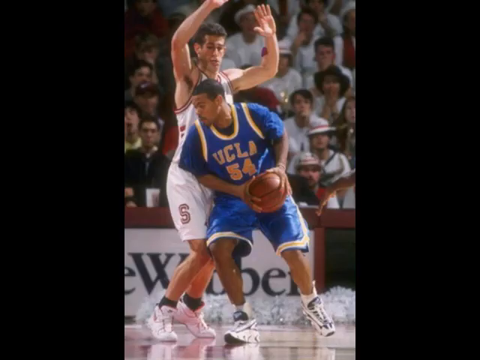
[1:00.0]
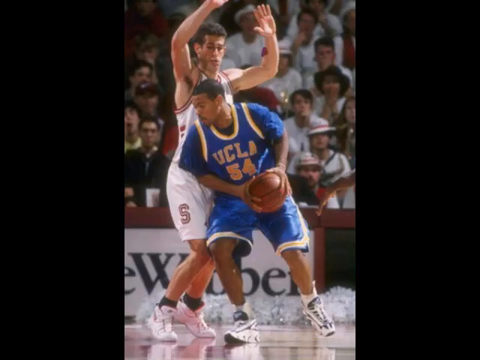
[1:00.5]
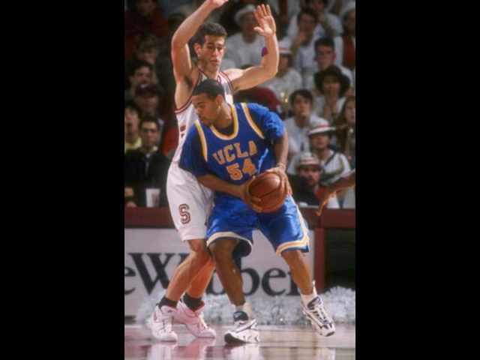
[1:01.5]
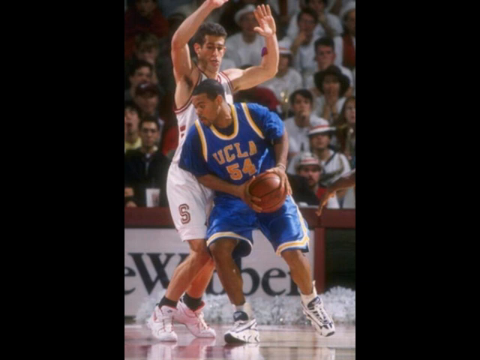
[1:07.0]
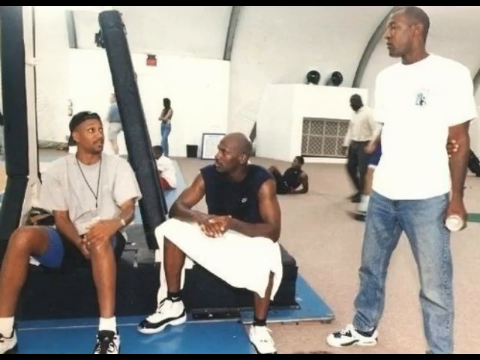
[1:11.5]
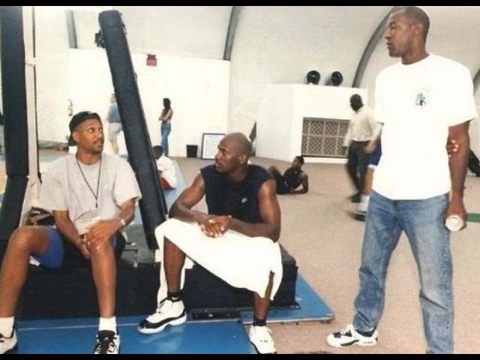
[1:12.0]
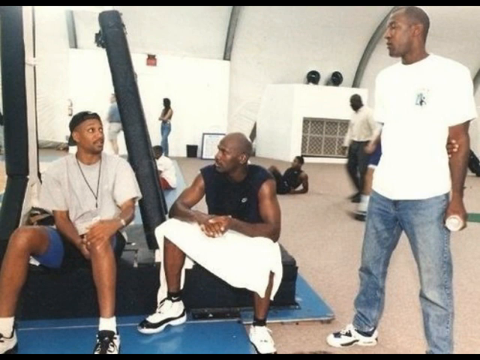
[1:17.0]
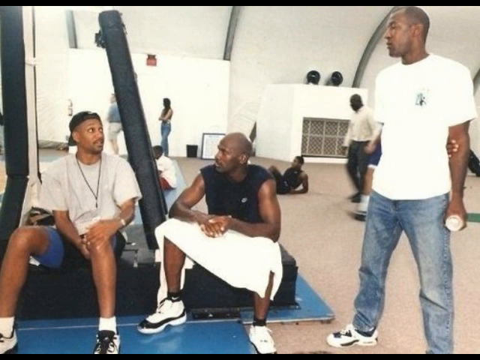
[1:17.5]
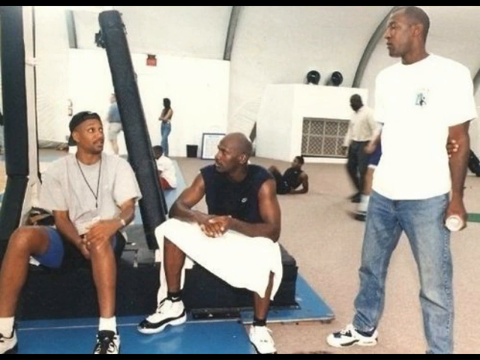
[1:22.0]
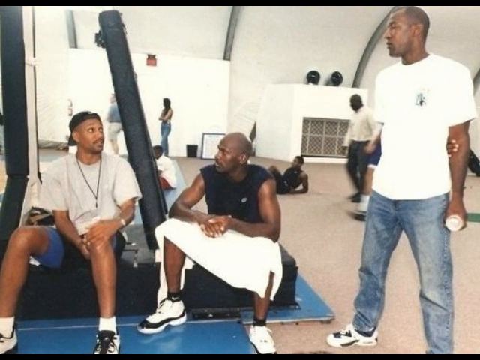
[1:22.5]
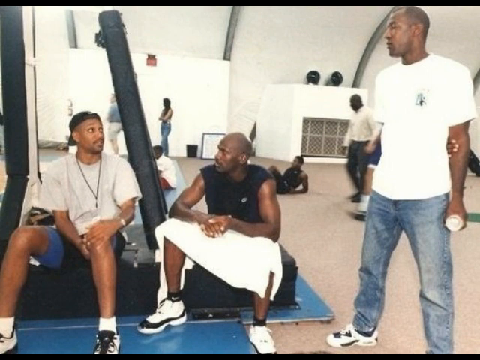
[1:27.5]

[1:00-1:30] An older-looking photo shows a UCLA player in a blue and gold uniform, number 54, with both hands on the ball. Another player guarding them looks a little taller: a white male with both hands up, wearing a white and red uniform with something like an S at the bottom right of his shorts. A crowd is in the background, though not much of it is visible because the photo is at a diagonal, looking as if it was taken with a phone. People in the background sit in the stands, mostly white men and women. Next is a photo of three individuals, with others in the background, in what seems to be a workout room or rest area, possibly for wide ranges of movement such as gymnastics. All three are African American males; two are sitting down, two wear shorts, and the one standing up wears jeans.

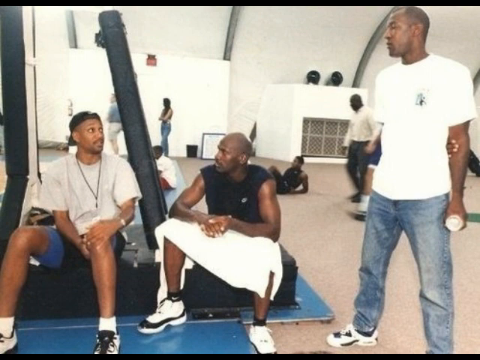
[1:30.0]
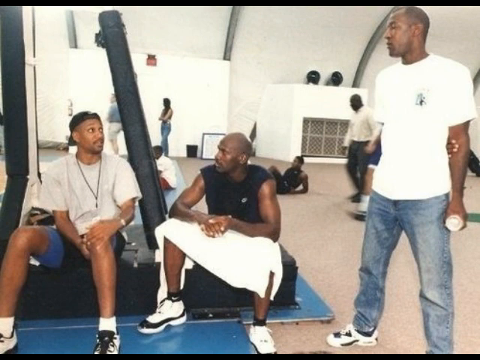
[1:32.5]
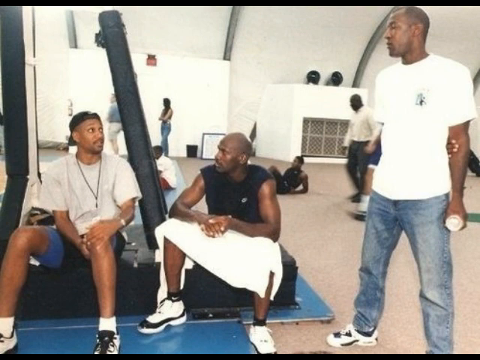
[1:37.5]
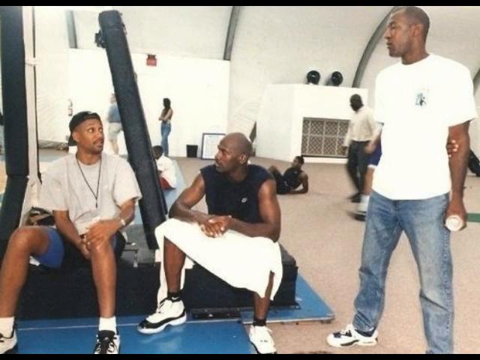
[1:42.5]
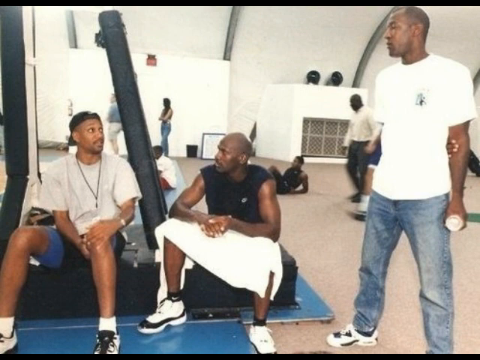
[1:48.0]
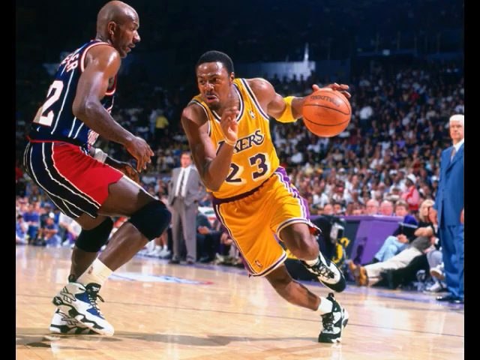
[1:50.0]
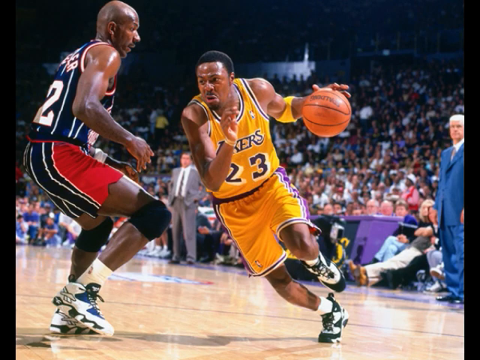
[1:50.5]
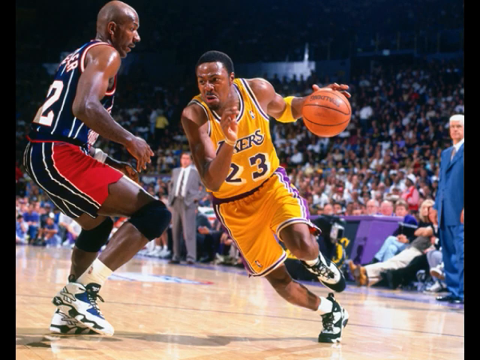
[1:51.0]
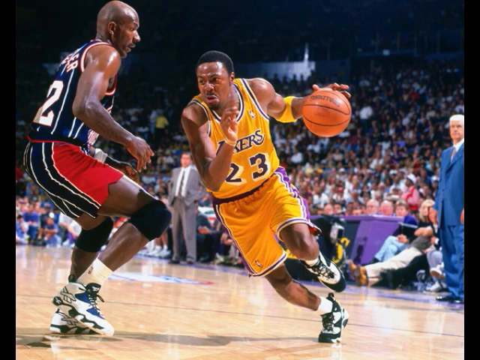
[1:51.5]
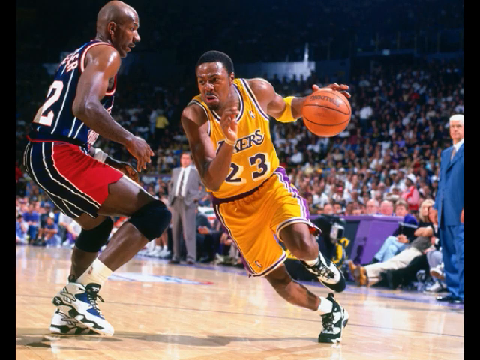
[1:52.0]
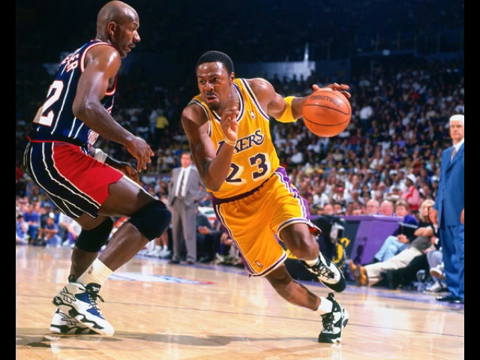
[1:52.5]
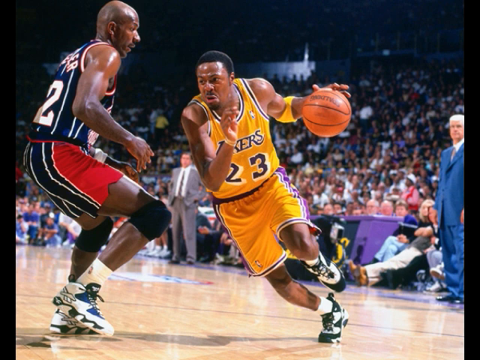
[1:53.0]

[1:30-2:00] The scene is a large room that resembles a miniature gymnasium; it lacks the height of a full stadium but is tall enough to be a facility. Of the three individuals, two are sitting and one is standing. The one all the way on the left has a hat on backwards and some type of chain or whistle around their neck. The one in the middle has a white towel covering their legs almost halfway. The standing male has an arm tucked behind his back, apparently the right arm, and looks at the person all the way on the left. The person in the middle is shown, and the person on the left seems to have their attention. The view then goes back to number 23, possibly one of the same people talking in that facility, who has the ball and an intense expression while moving toward the defender in what looks like a live game, with people in the stadium.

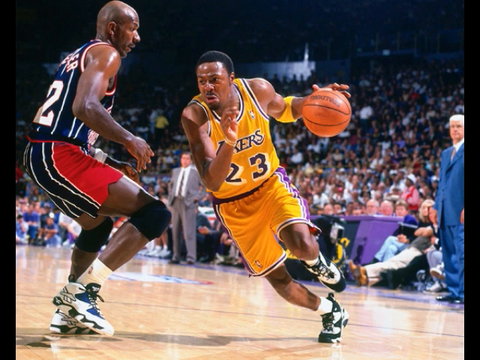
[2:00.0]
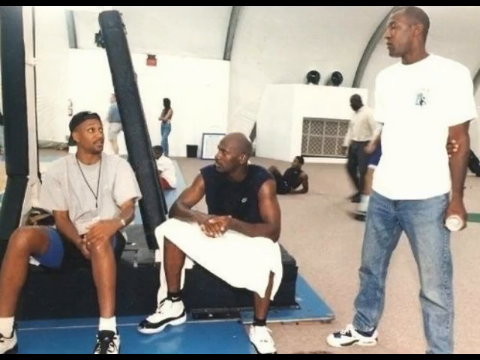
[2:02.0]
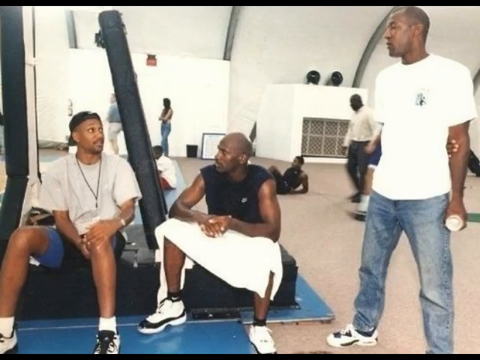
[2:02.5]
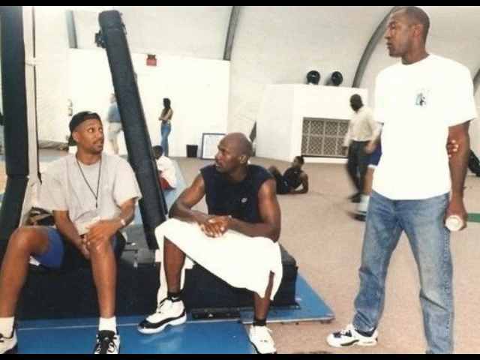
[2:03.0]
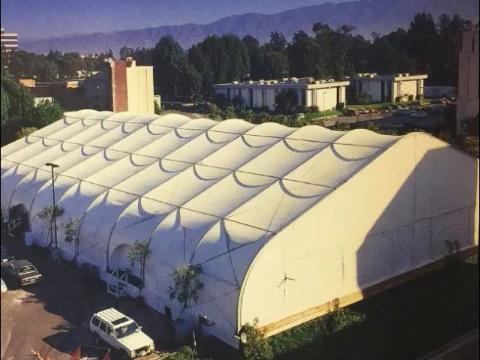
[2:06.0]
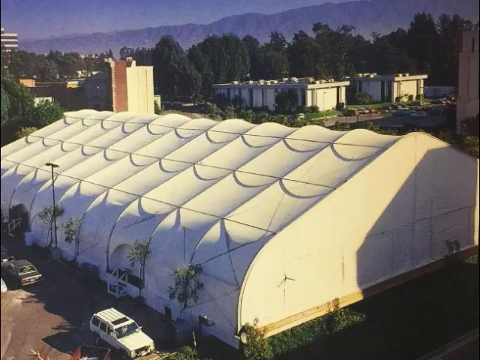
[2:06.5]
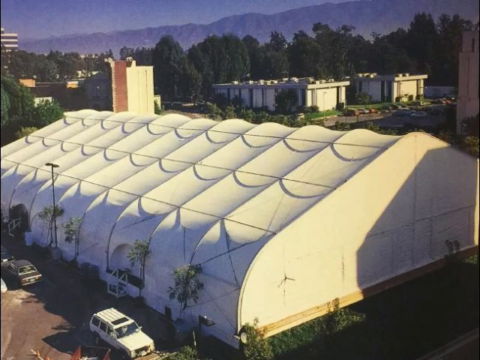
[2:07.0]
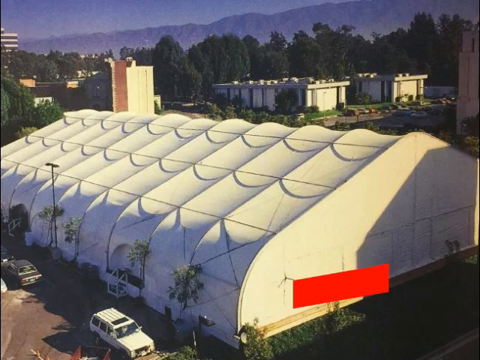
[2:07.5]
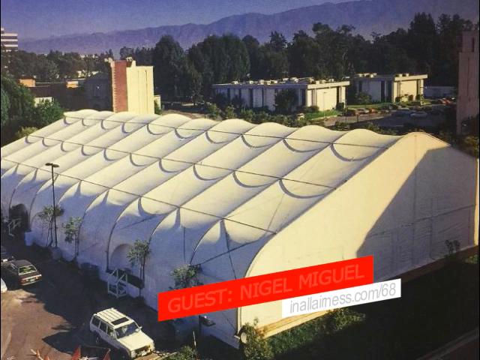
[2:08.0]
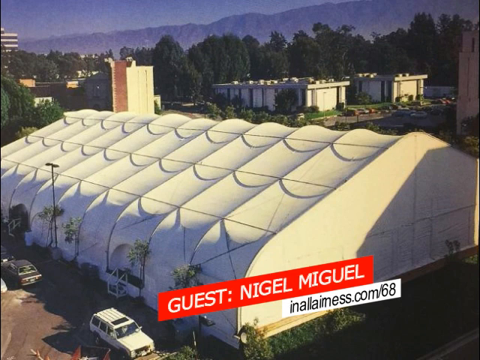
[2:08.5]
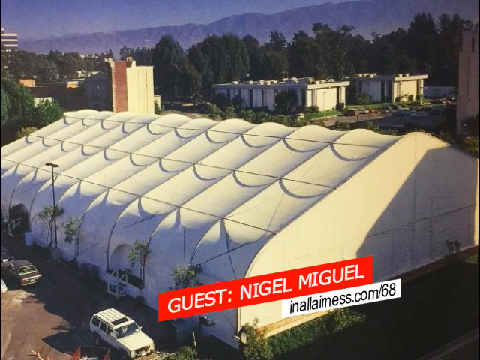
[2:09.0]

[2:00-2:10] During a professional NBA game, number 23 has the ball in mid-dribble with the left hand, the right hand kind of clenching up a little. The view pans to the individuals sitting and standing in the facility, then pans out to show what is possibly the facility from the outside: a big tent-like building with some trees around it and some cars outside. Mountains appear in the background, with a possible valley. Text that appears to read "Nigel McGill" is at the bottom of the screen, looking like a computer-graphic title. Other buildings are in the background; two of them seem to be the same size, and to the left of those two is a taller one with some red brick on the side. Behind them is a bunch of trees taller than the buildings. The sky is open, and it looks like daytime.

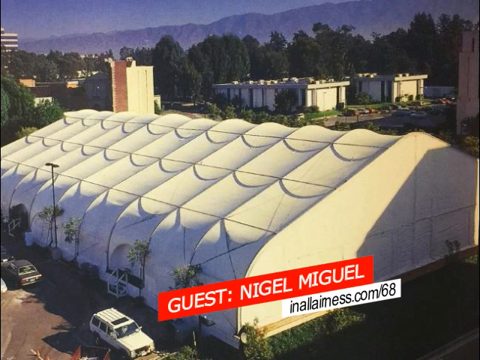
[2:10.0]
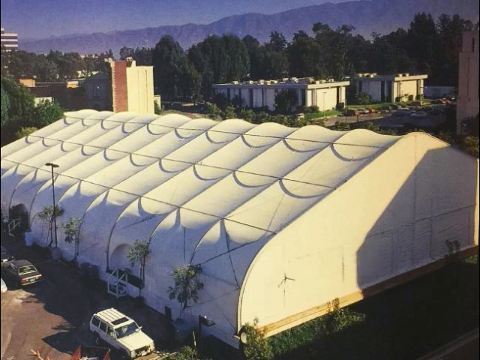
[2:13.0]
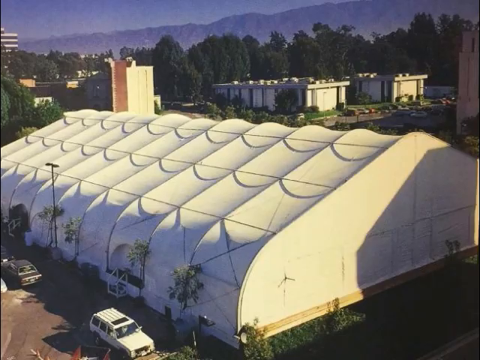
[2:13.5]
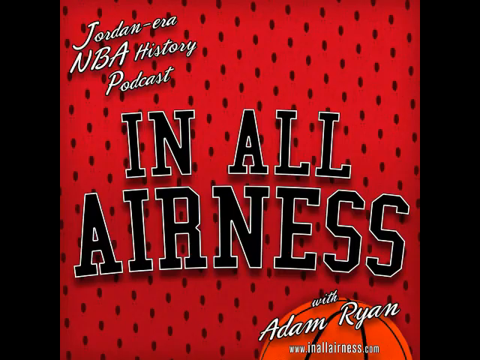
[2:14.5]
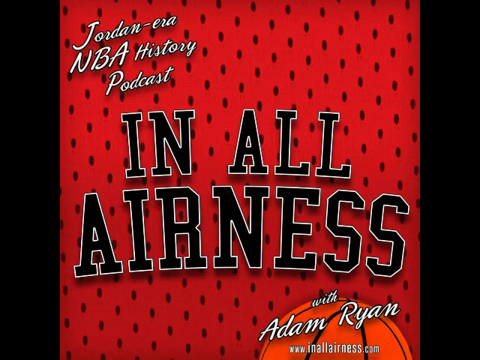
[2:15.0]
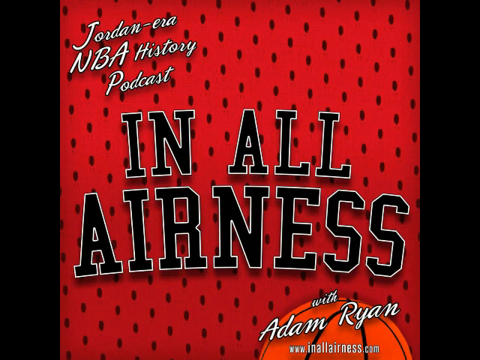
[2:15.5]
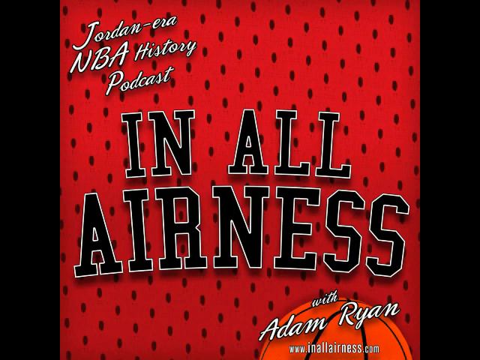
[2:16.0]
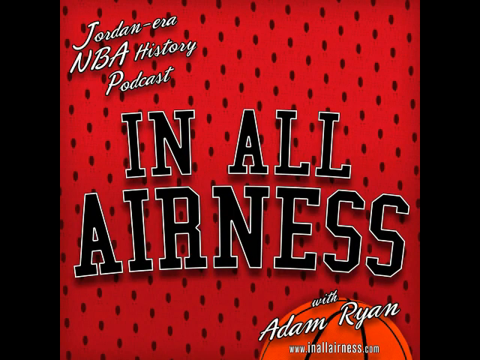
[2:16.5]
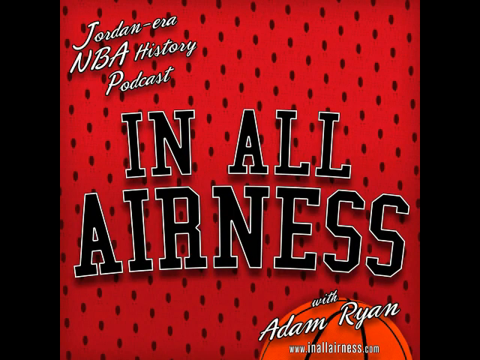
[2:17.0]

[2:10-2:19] The facility where the people were sitting and talking is seen from outside; it resembles a tent, especially from this angle, sloping down. Then a title screen reads "Jordan Era MBA History Podcast," "In All Earnest," and "with Adam Ryan." "In All Earnest" is bolded and seems to be the main title, while "with Adam Ryan" is smaller in the right-hand corner. A reddish mesh, possibly an old uniform, is in the background. At the very bottom is what looks like part of a basketball in computer clip art, behind the Adam Ryan name, which is in the same font as "Jordan Era MBA History Podcast." The left and right sides of the screen are black.